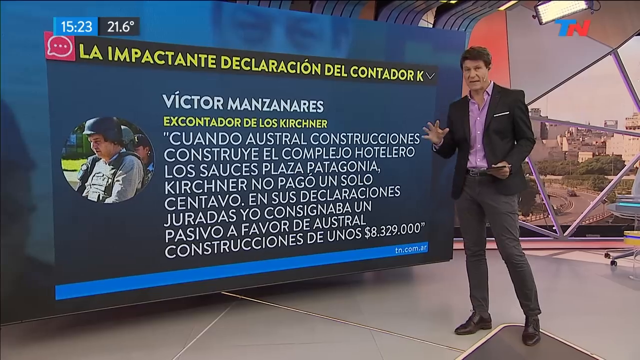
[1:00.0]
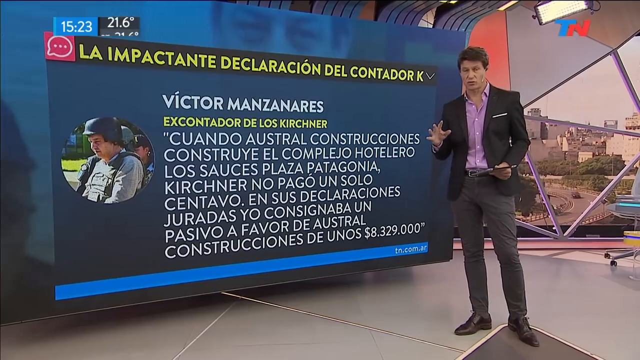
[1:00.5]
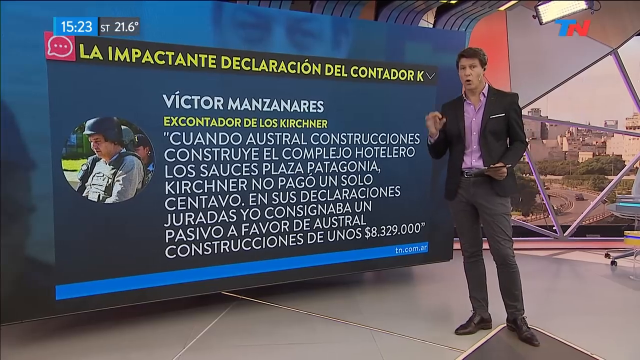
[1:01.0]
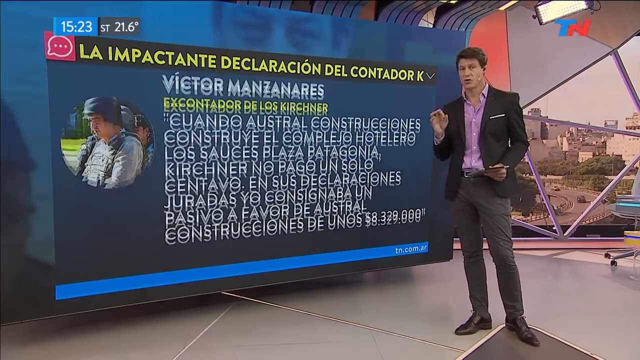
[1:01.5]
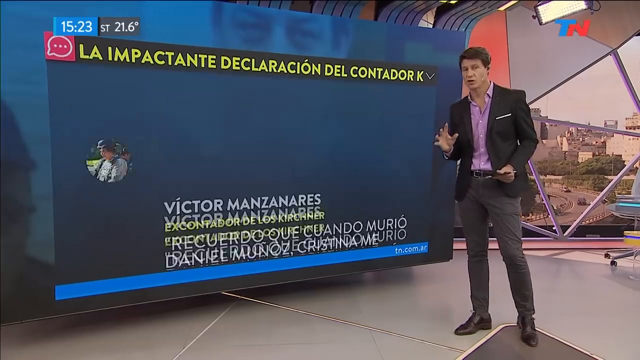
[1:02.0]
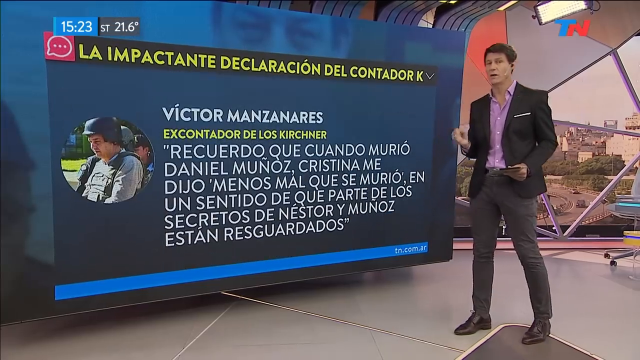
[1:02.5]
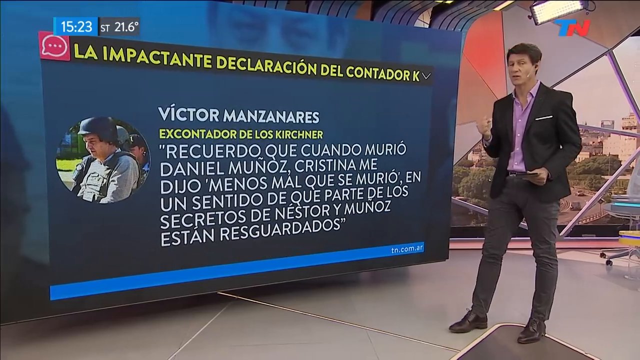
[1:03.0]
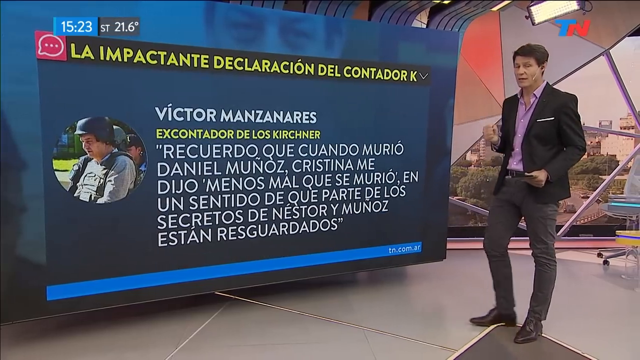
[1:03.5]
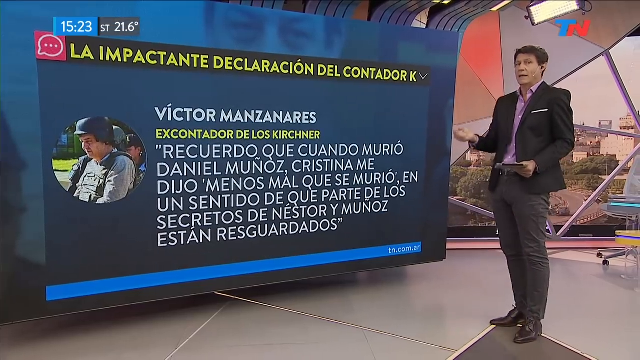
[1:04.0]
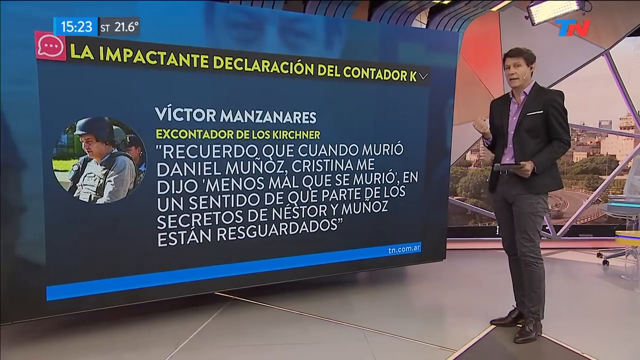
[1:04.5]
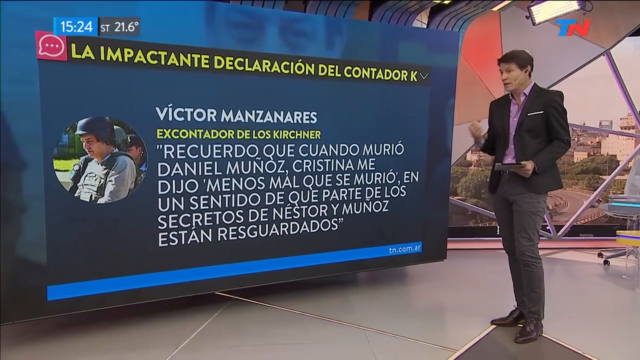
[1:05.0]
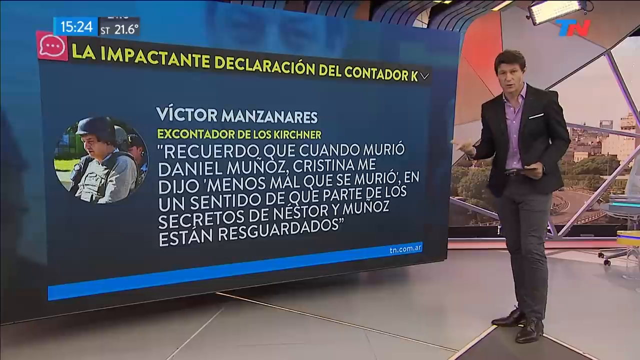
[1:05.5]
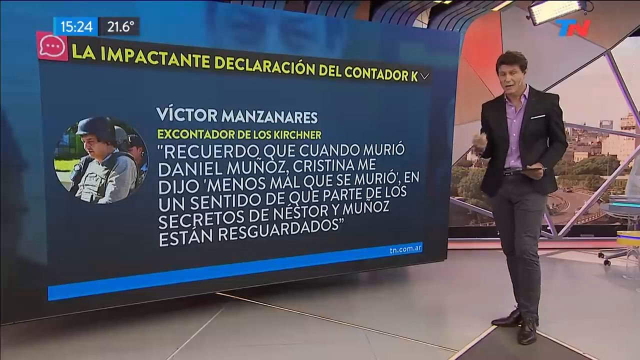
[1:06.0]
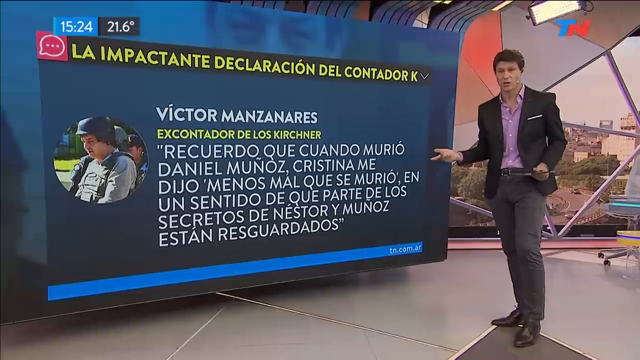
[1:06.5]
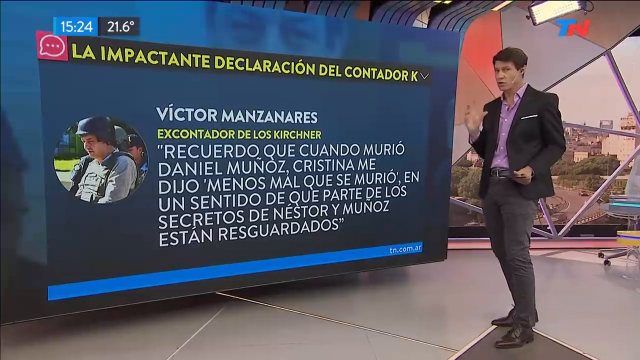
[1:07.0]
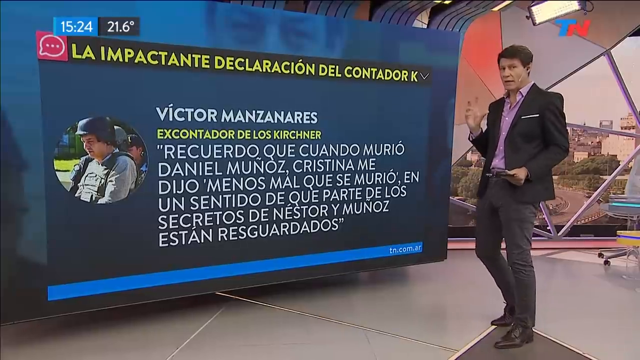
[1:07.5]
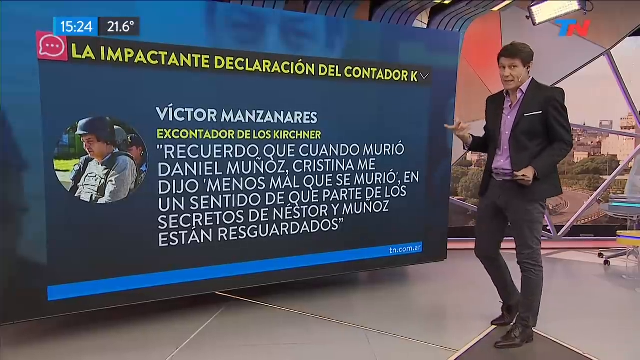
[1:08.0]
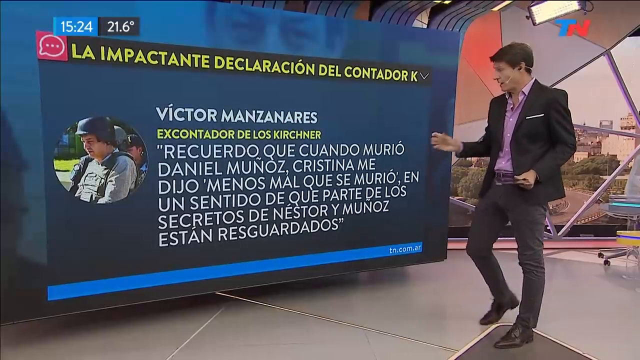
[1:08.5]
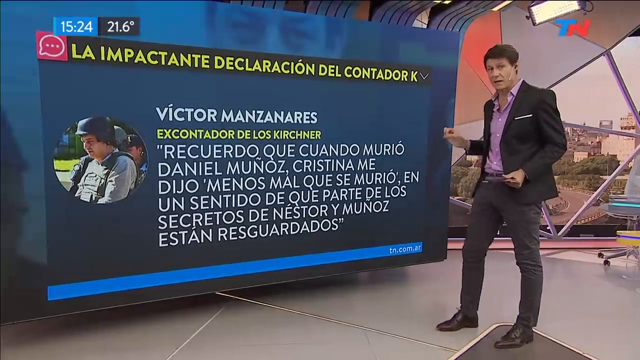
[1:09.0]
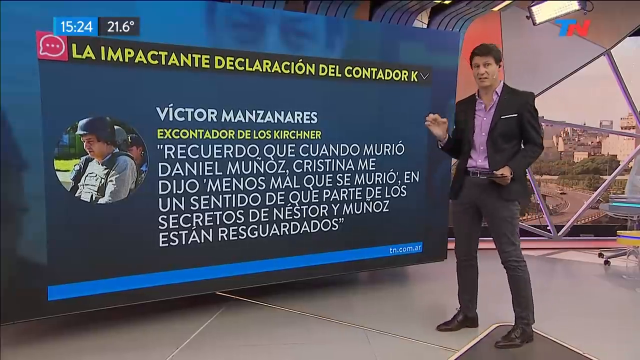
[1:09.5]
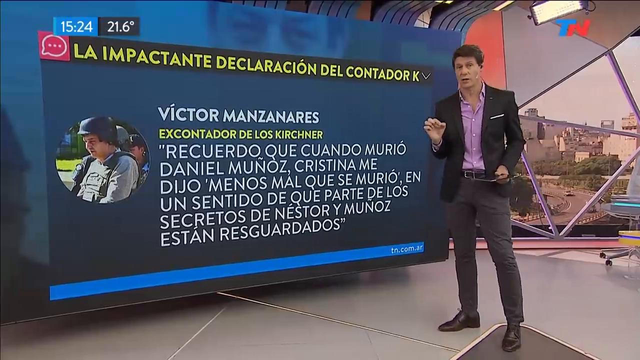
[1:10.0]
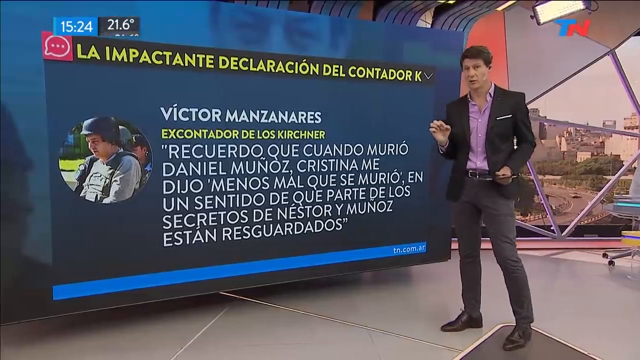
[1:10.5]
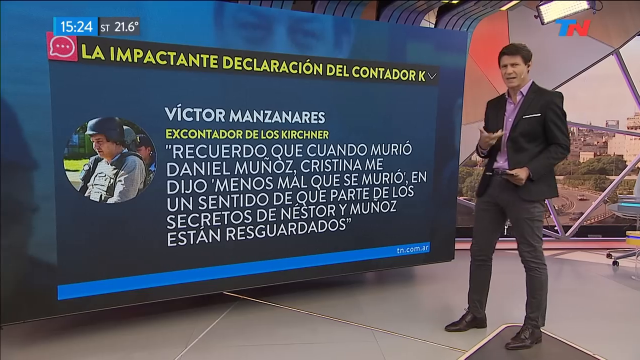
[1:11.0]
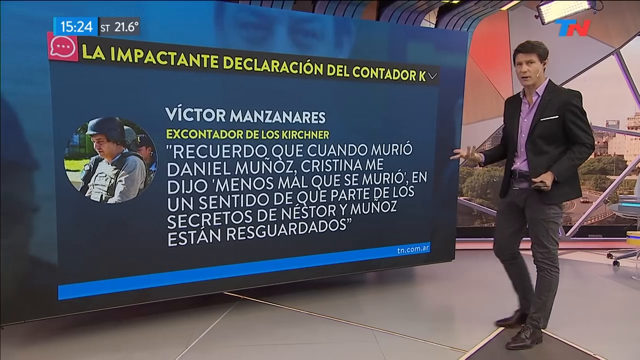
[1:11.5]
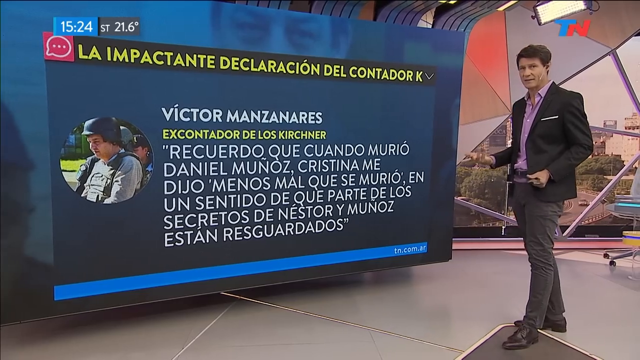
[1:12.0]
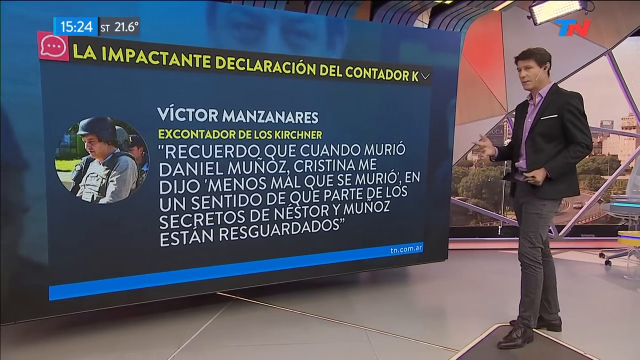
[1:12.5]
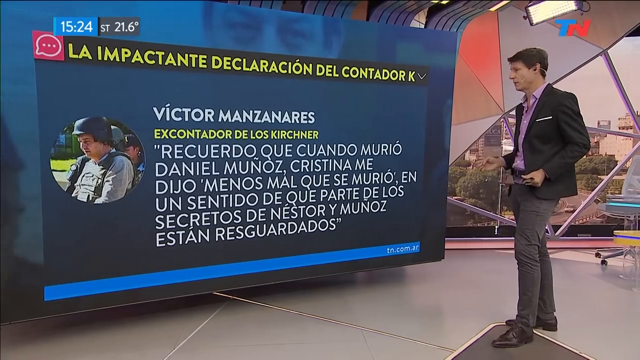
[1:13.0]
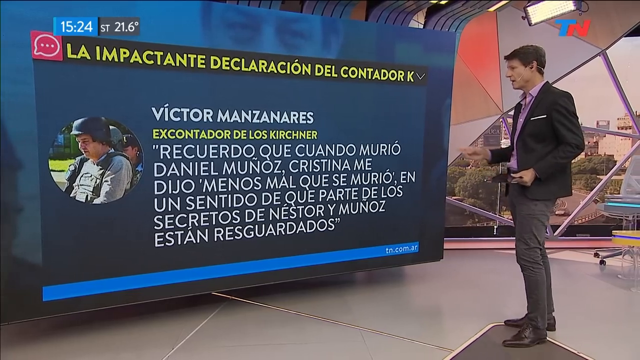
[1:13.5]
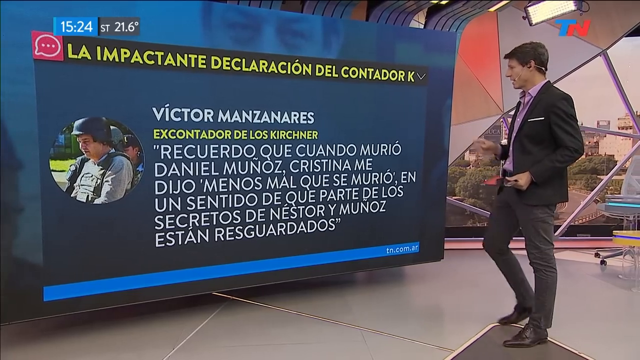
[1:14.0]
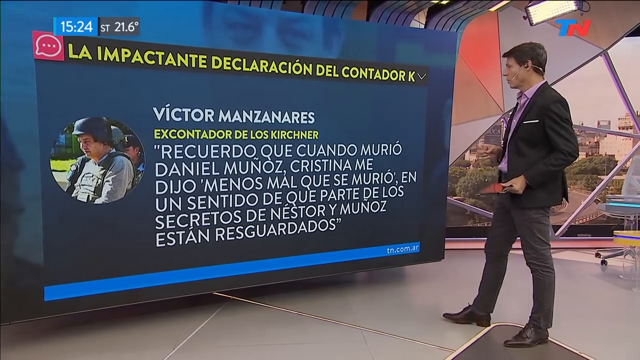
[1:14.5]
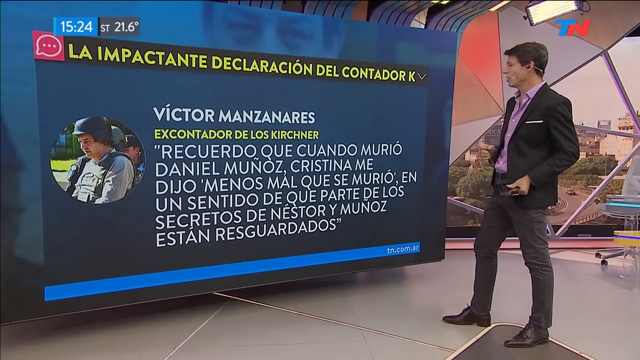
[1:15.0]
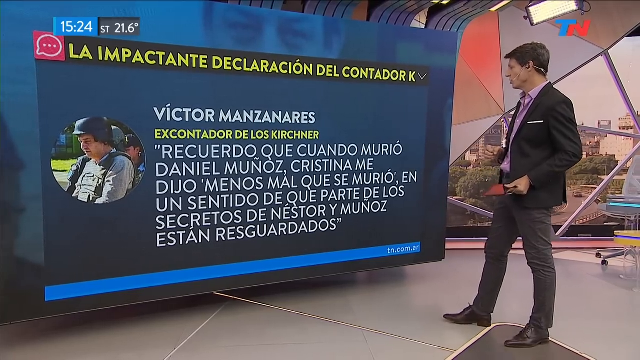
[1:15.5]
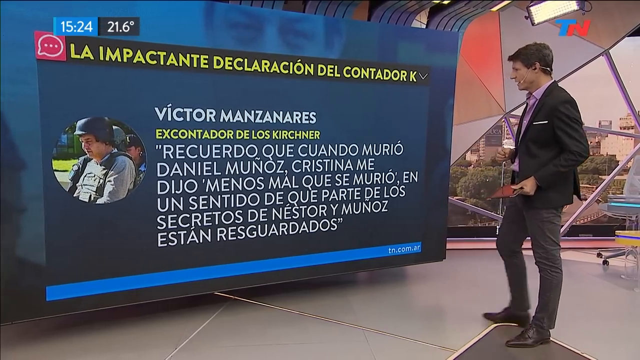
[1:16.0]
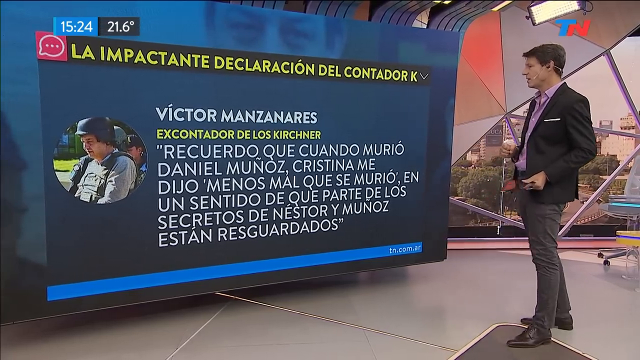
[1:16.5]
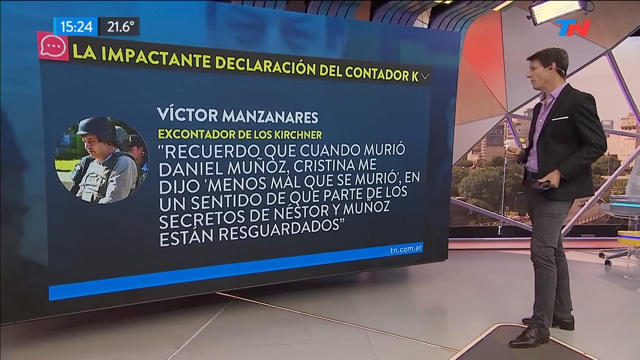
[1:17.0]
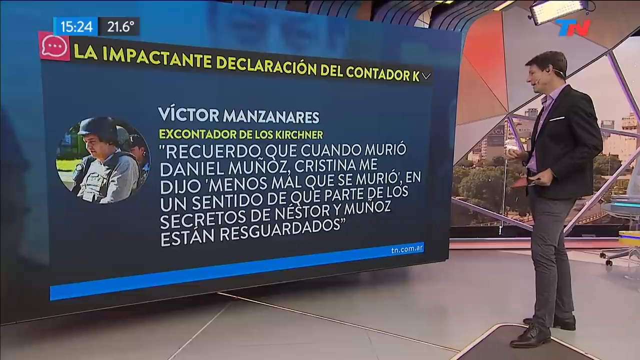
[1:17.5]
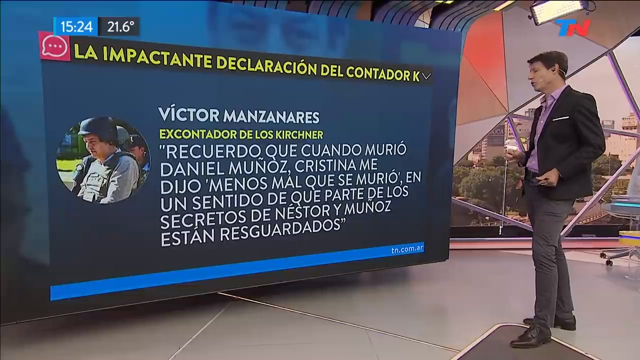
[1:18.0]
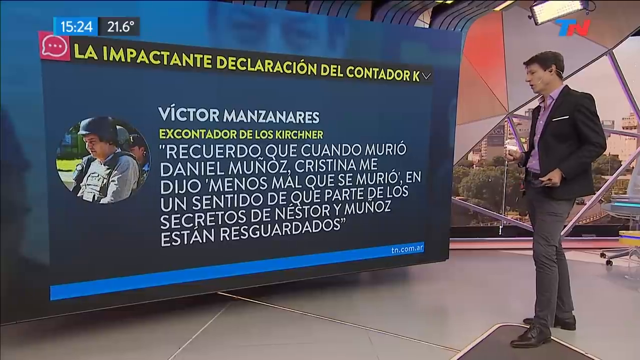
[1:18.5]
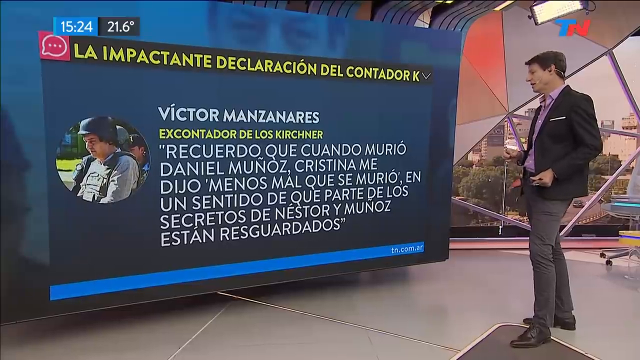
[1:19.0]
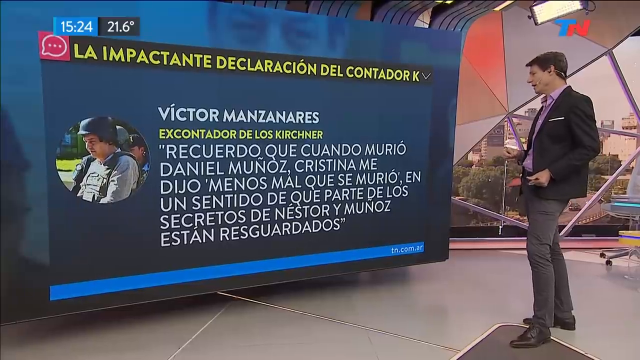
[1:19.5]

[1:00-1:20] In the studio, the same man, a reporter, wears a dark black jacket and somewhat gray, dark gray pants that do not exactly match the jacket. He looks at the camera, moving his right arm up and down, and at one point seems to shrug his shoulders as he speaks. He points briefly at the video monitor to his left, then turns so that he is seen almost from the side, looking fully at the monitor. At times he points toward it, and at times his hand is by his side in front of him. He has something white in his jacket pocket, possibly a handkerchief. He has dark hair.